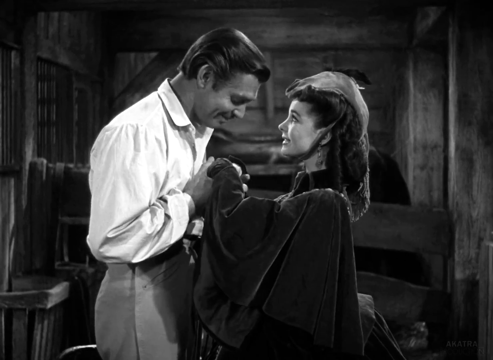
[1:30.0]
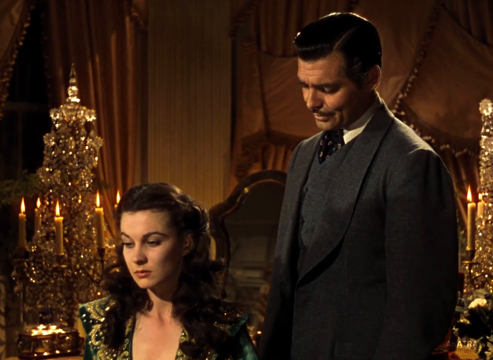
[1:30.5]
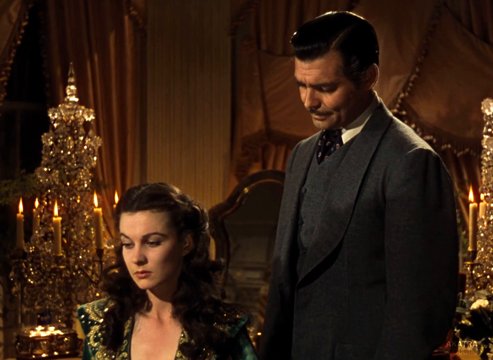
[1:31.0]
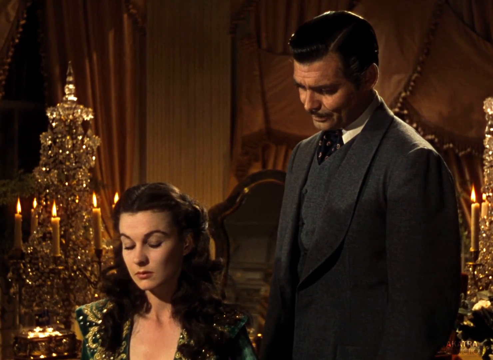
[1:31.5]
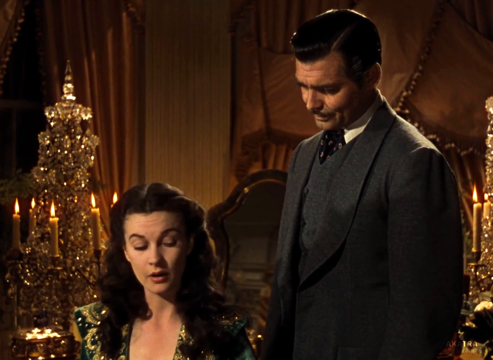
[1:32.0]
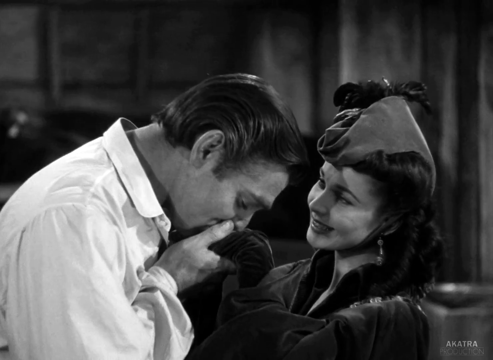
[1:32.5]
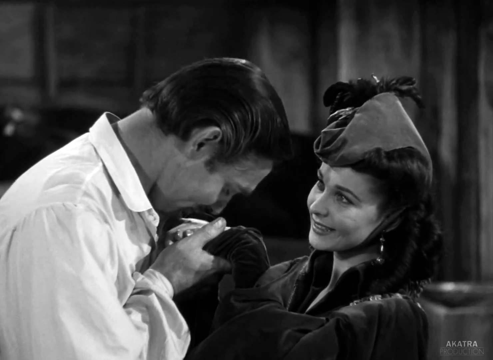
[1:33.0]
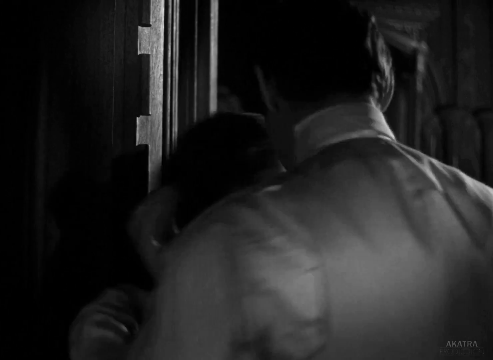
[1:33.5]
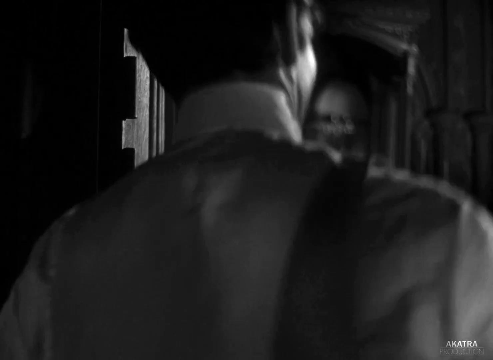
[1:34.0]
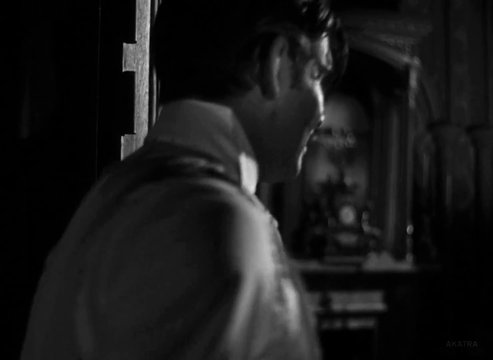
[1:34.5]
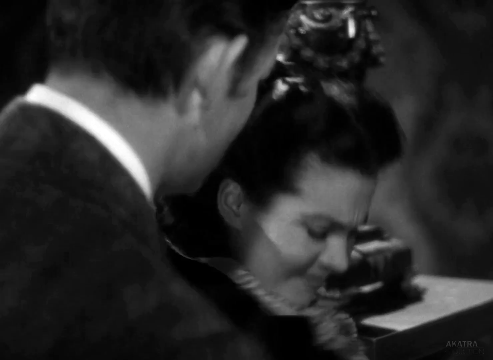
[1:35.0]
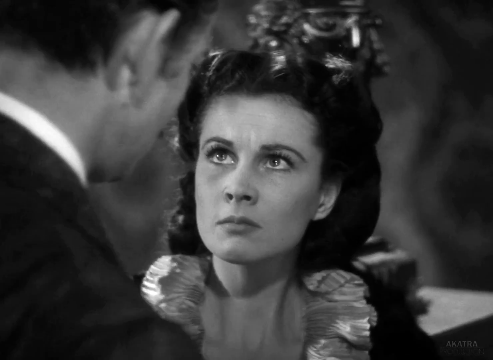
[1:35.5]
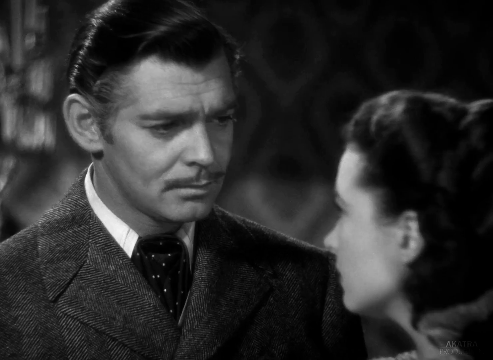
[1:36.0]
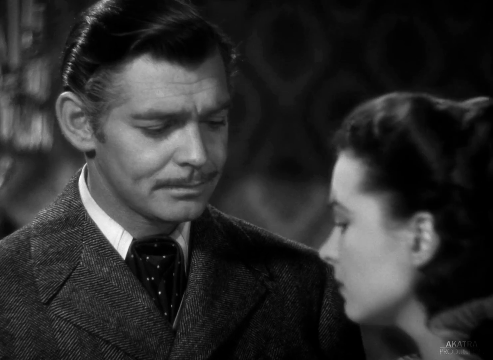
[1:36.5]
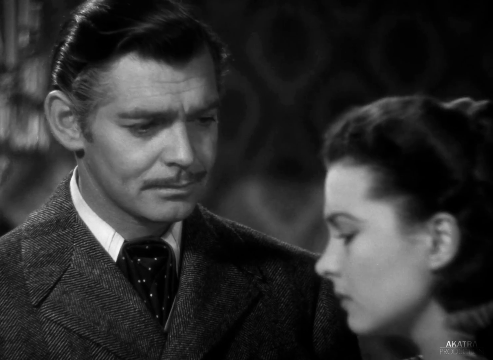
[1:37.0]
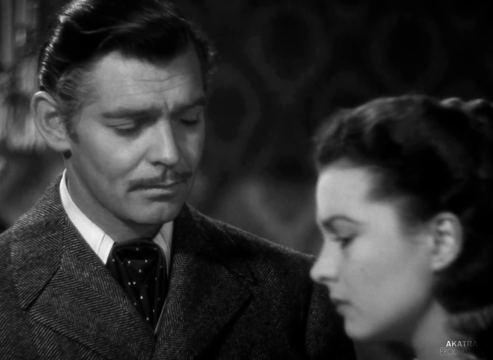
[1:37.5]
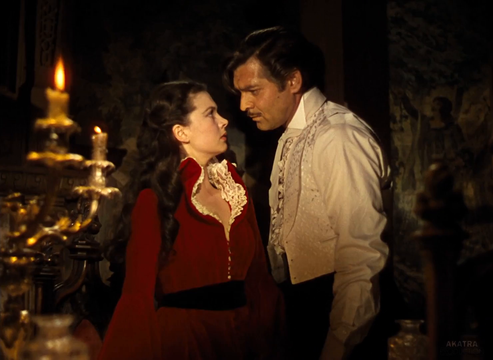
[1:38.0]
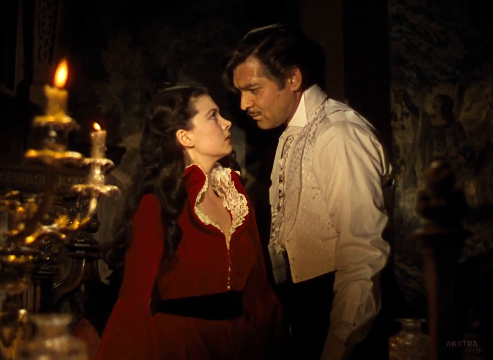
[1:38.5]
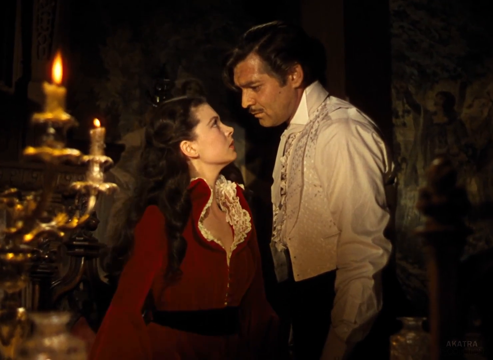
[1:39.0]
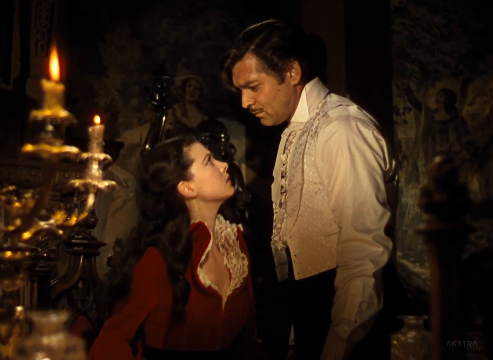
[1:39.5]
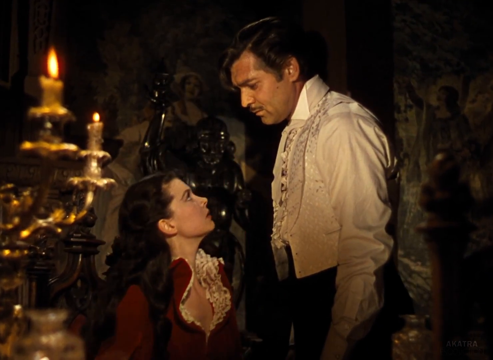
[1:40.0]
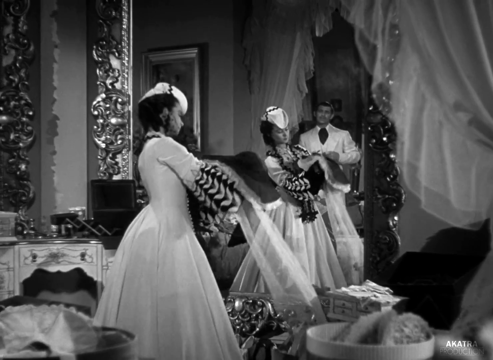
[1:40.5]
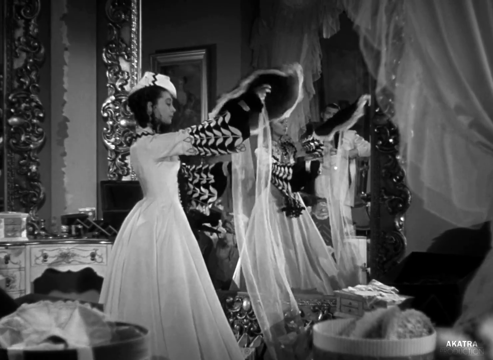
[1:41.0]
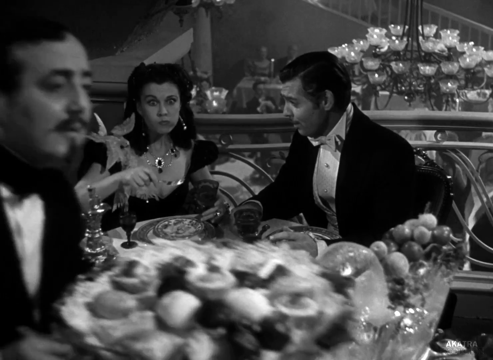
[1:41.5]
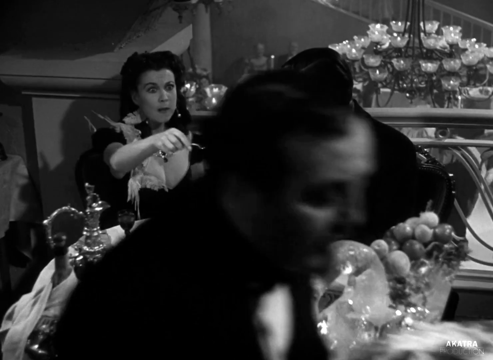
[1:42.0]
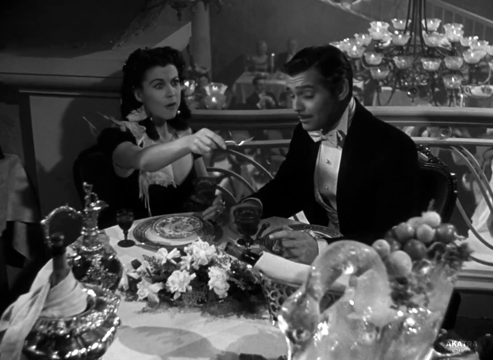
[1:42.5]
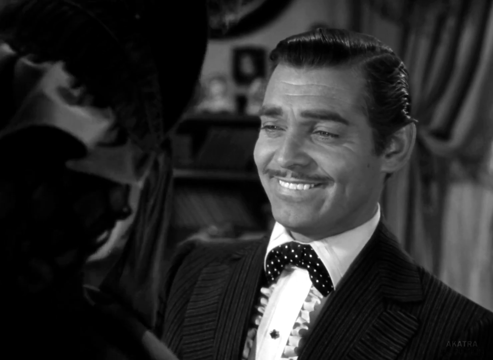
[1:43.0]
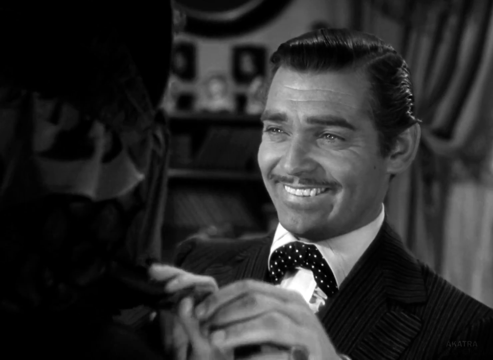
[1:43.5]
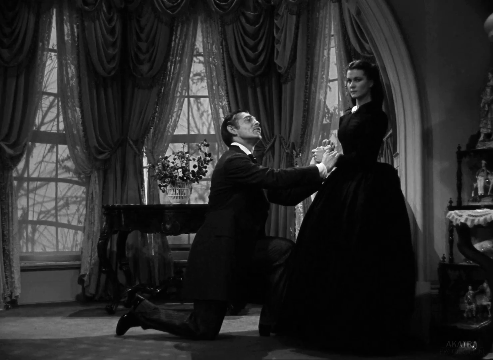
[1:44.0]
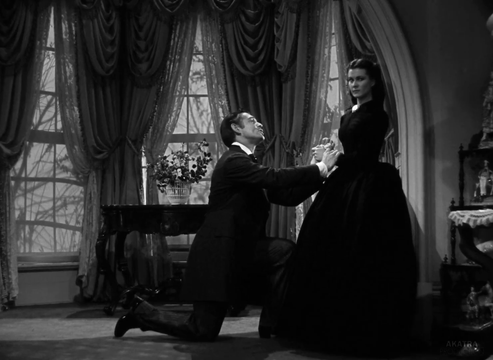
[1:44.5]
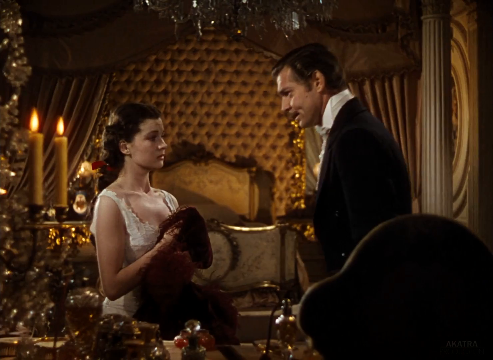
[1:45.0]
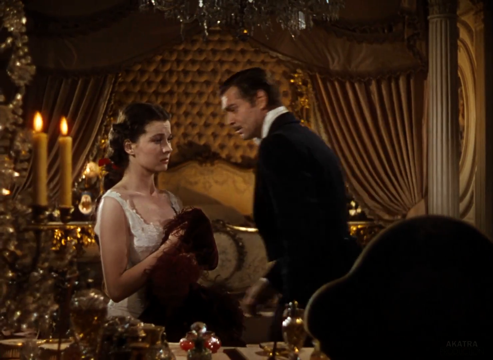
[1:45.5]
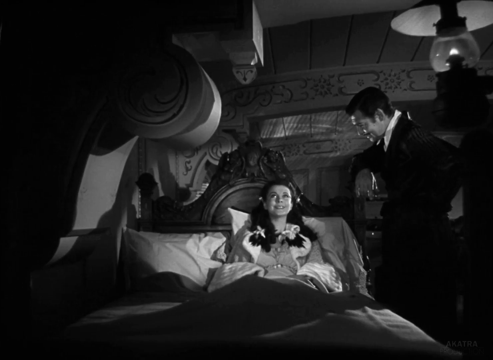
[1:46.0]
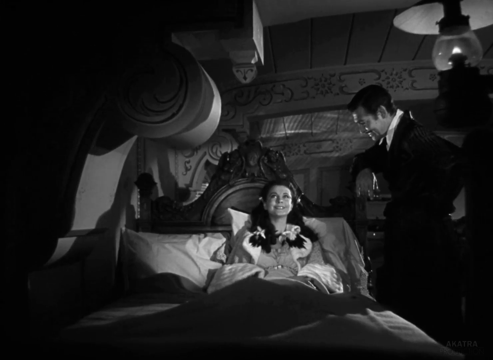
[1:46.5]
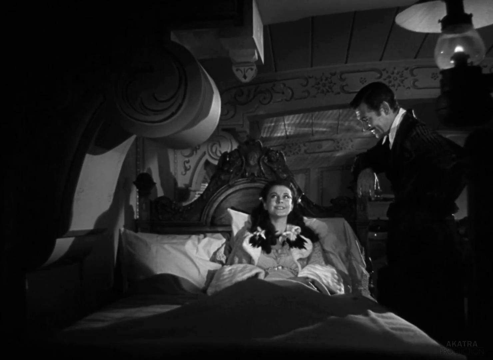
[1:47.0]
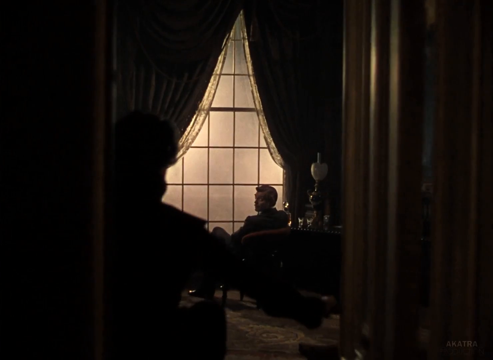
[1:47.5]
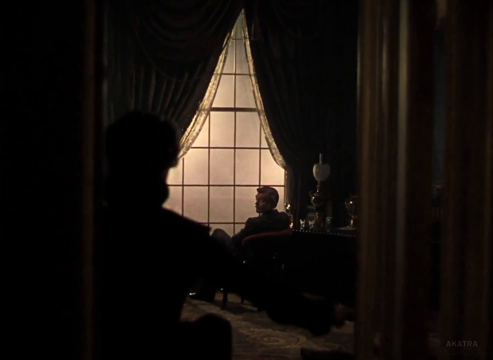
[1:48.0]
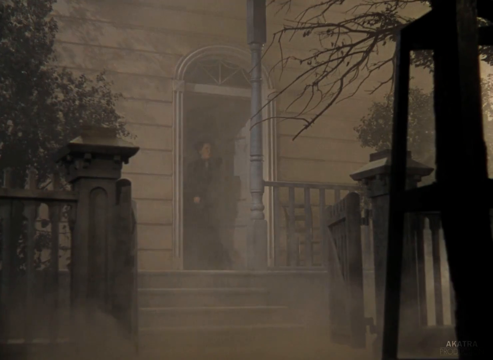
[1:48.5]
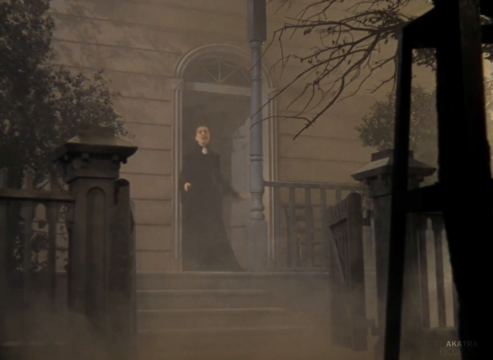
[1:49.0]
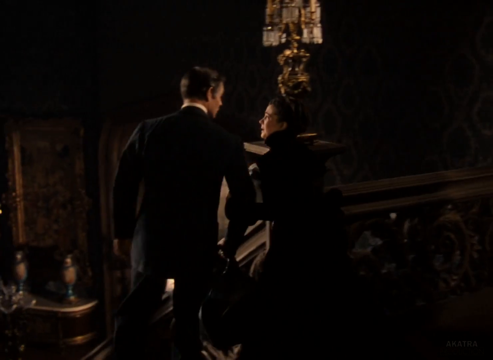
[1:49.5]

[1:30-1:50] The pair continues to be intimate and kiss each other, though in some parts the woman gets very angry when he touches her. Some women with very big hats dance indoors. The couple then eats at a table. A man appears to propose to the woman. In another part, the woman is in bed looking very happy while he talks to her. Another scene shows somebody apparently walking or running out of the house in a very foggy setting.